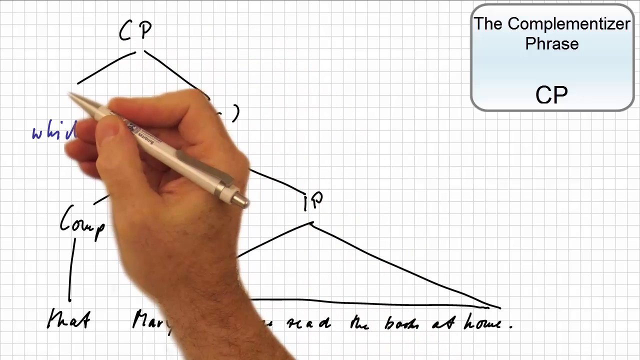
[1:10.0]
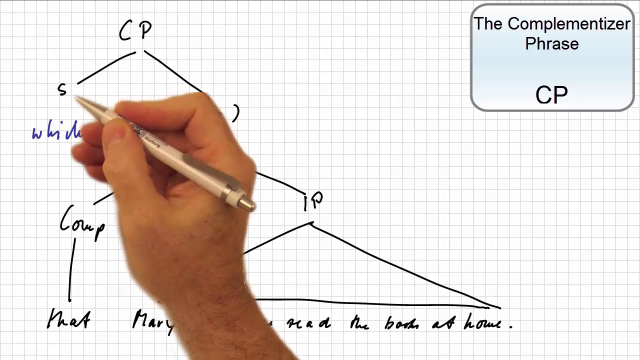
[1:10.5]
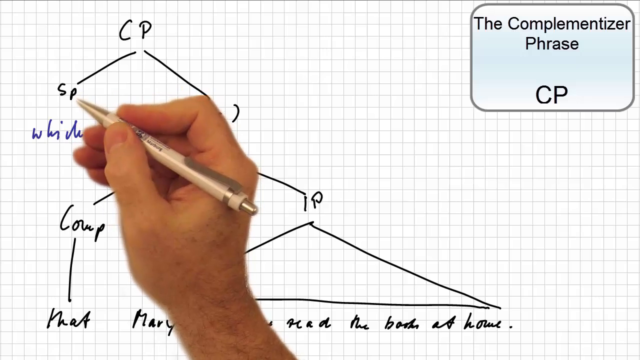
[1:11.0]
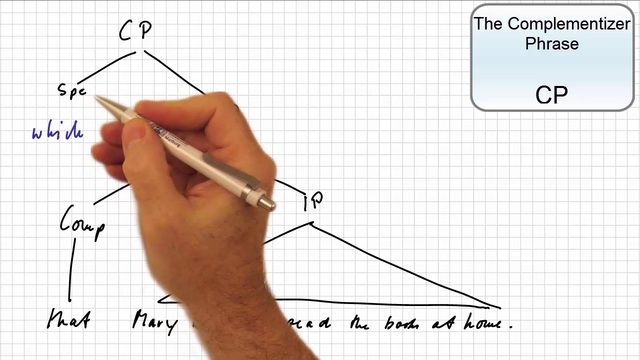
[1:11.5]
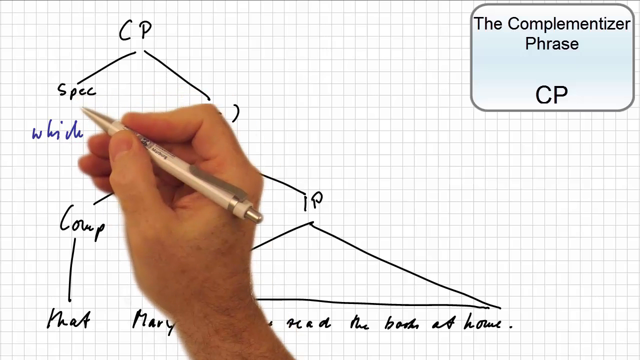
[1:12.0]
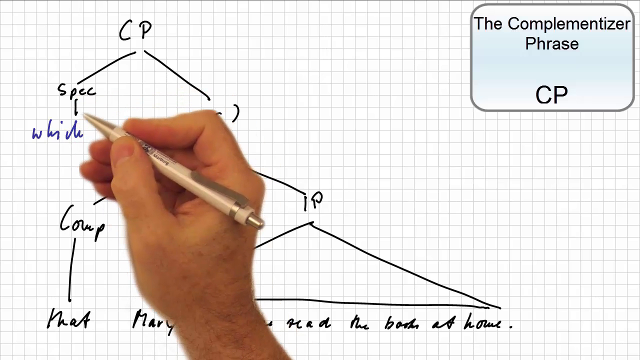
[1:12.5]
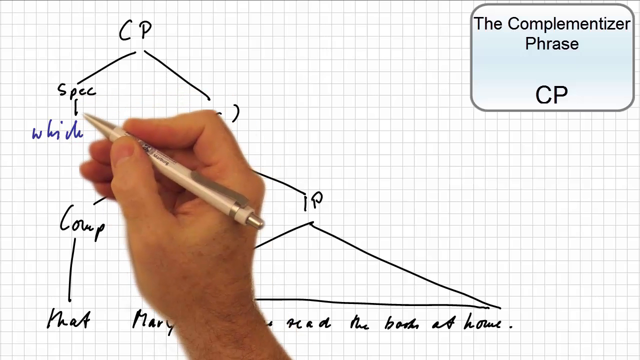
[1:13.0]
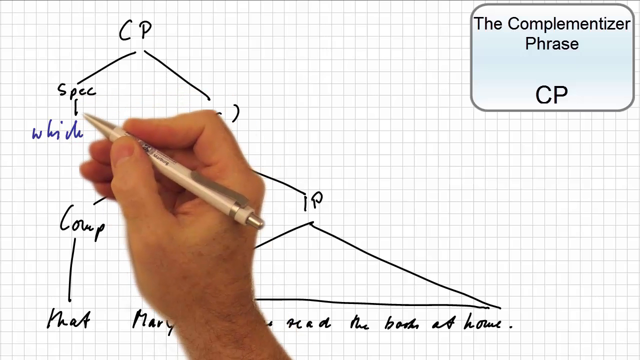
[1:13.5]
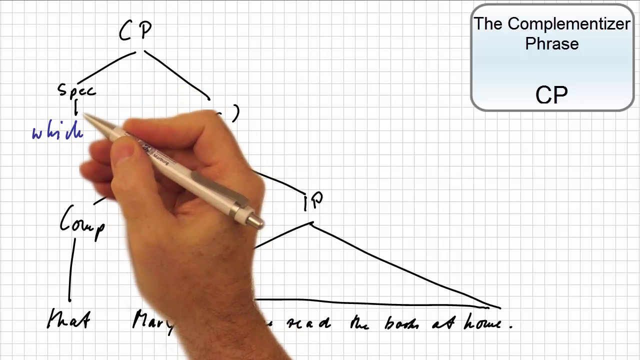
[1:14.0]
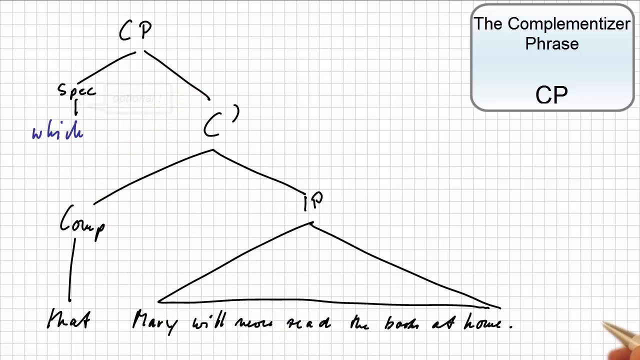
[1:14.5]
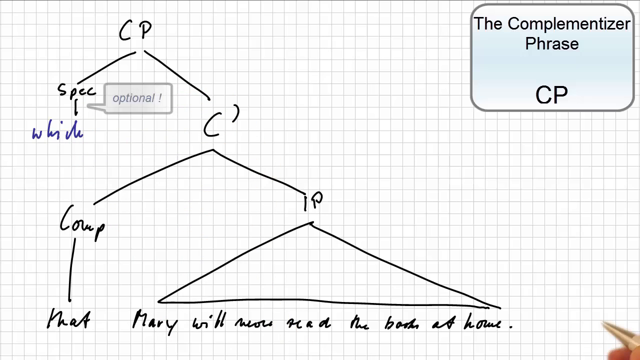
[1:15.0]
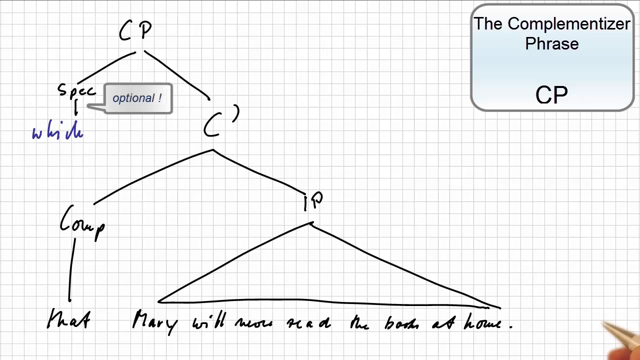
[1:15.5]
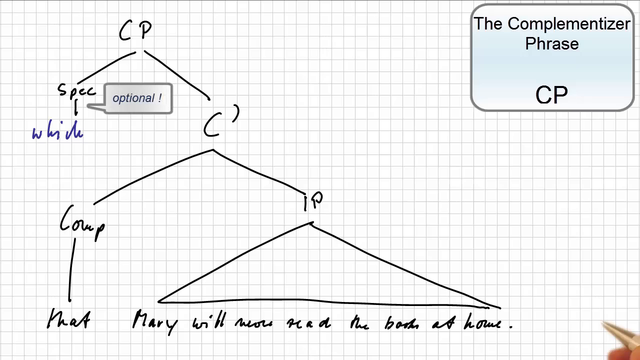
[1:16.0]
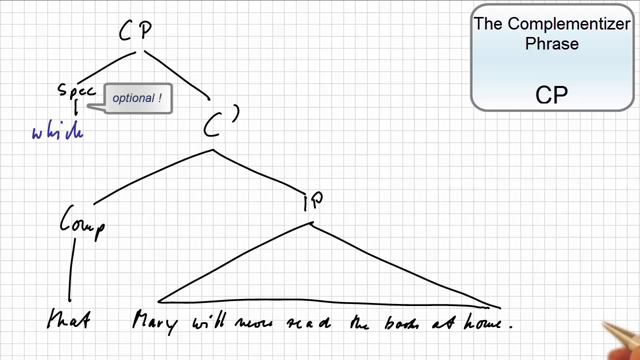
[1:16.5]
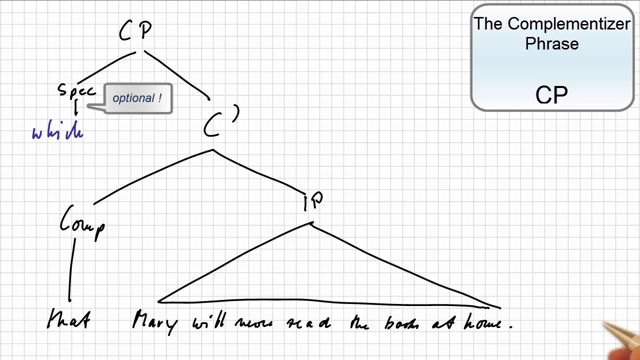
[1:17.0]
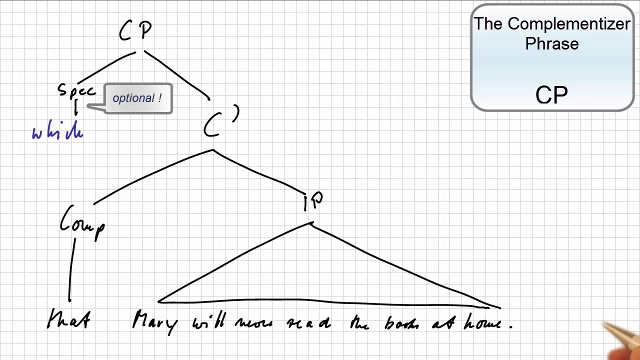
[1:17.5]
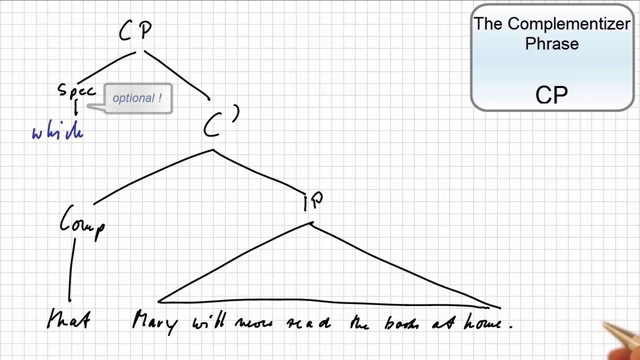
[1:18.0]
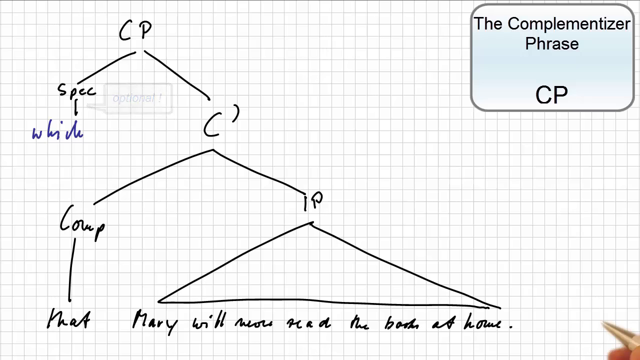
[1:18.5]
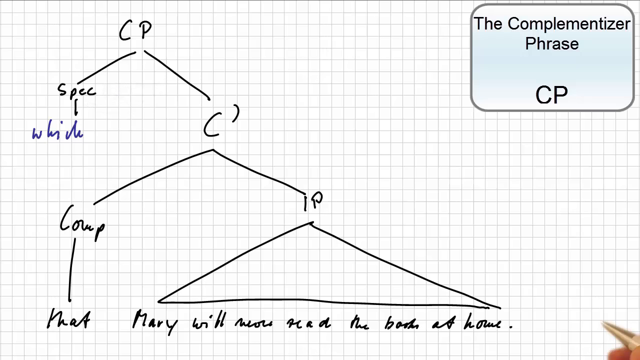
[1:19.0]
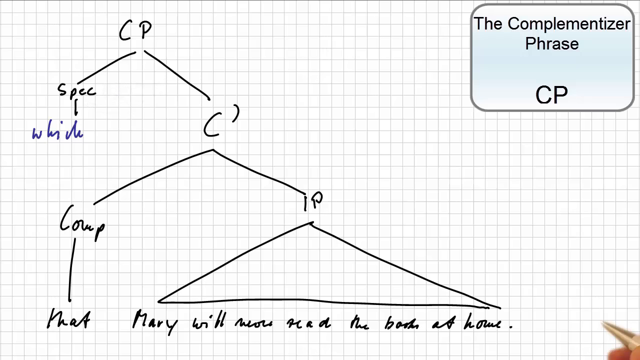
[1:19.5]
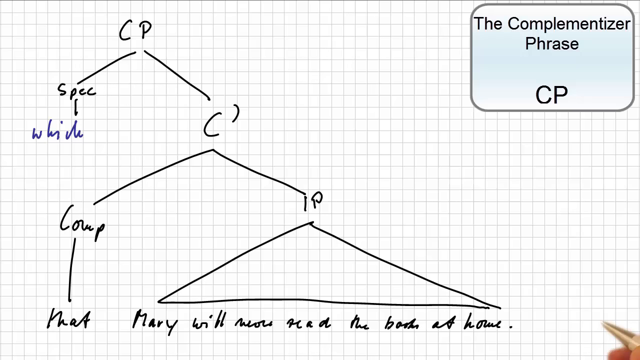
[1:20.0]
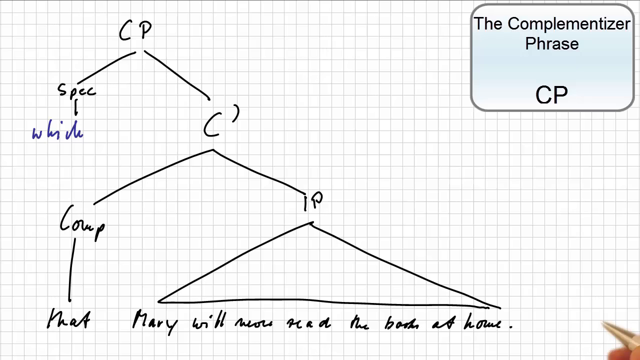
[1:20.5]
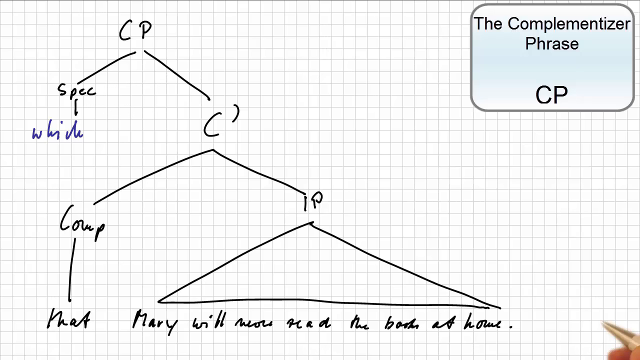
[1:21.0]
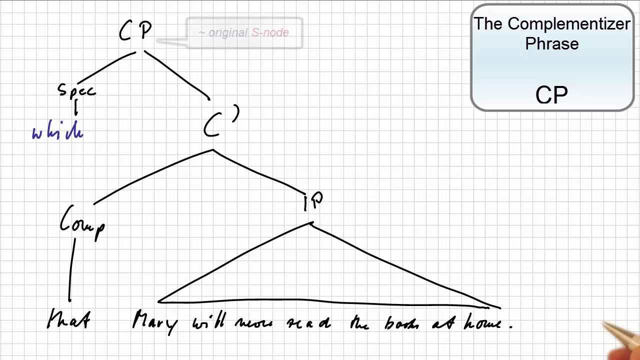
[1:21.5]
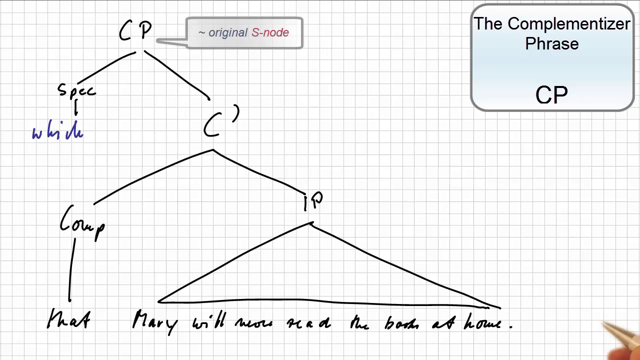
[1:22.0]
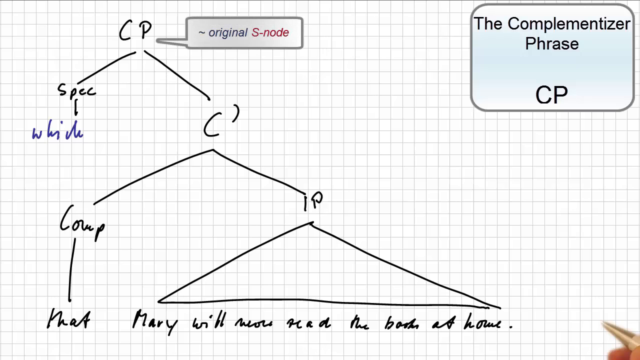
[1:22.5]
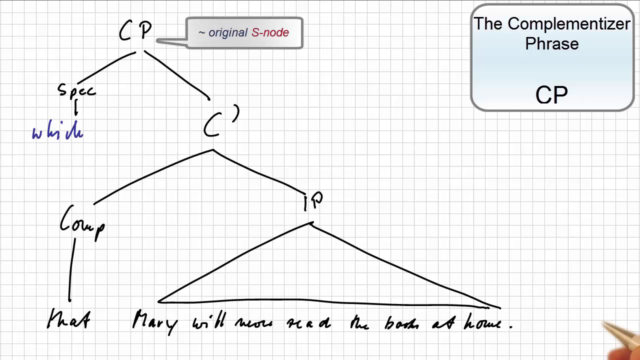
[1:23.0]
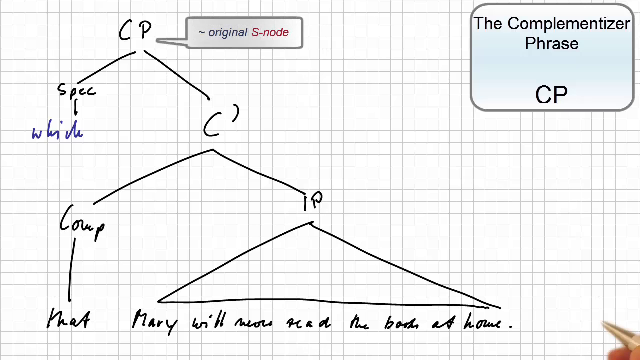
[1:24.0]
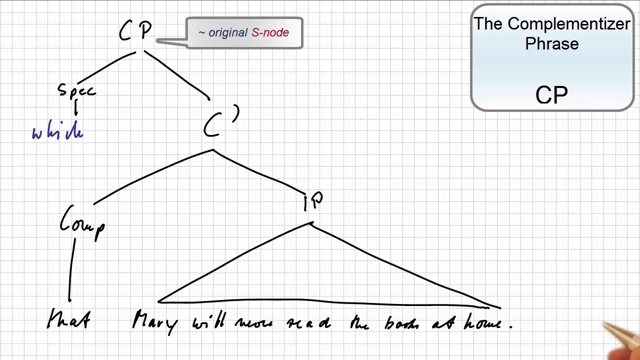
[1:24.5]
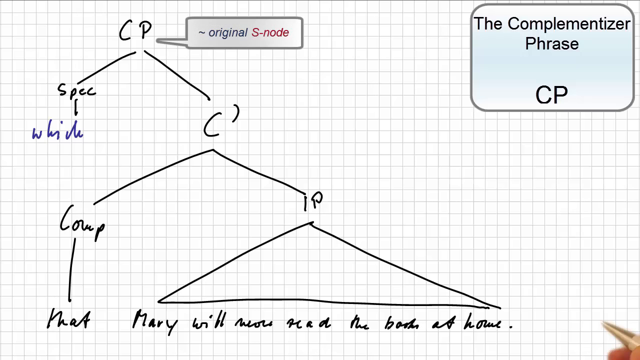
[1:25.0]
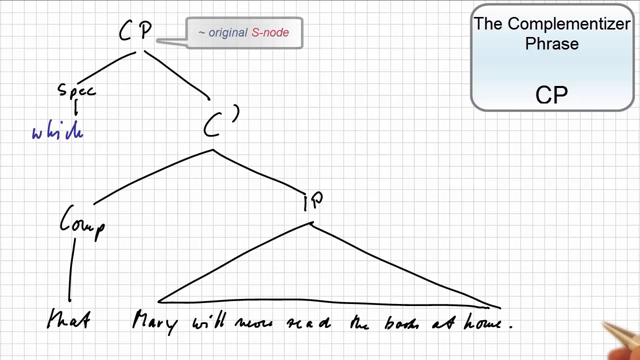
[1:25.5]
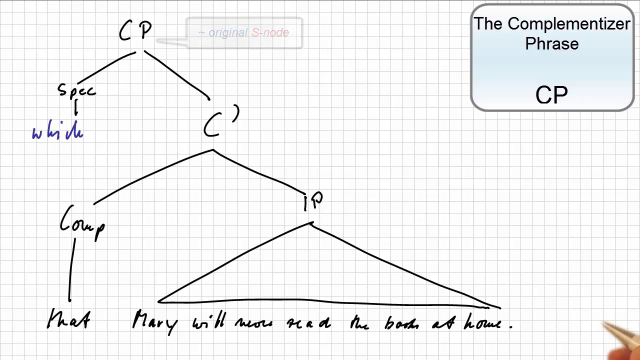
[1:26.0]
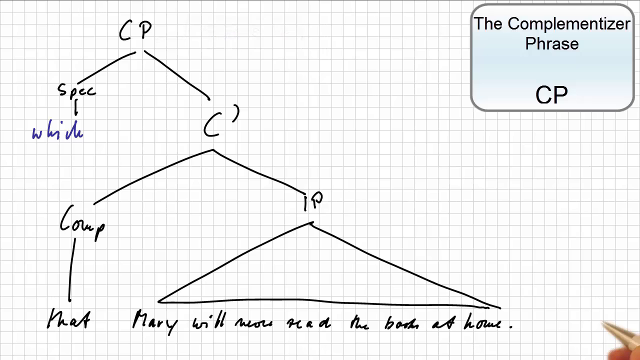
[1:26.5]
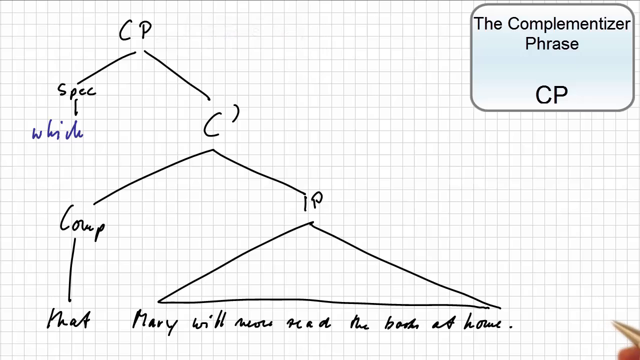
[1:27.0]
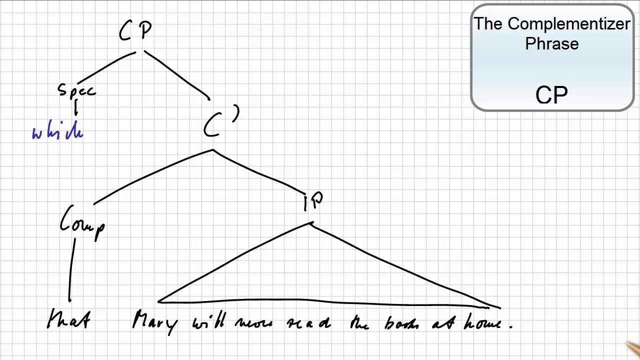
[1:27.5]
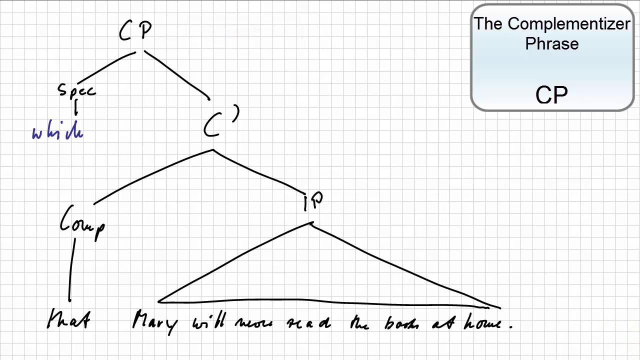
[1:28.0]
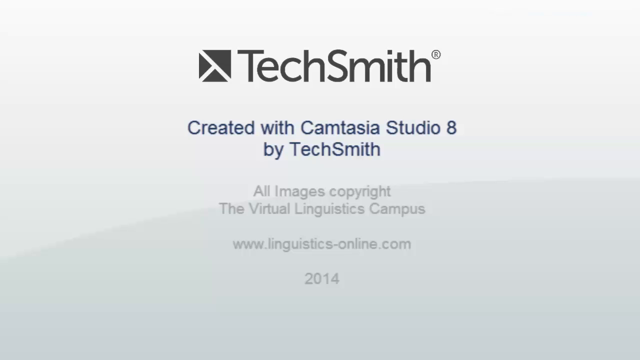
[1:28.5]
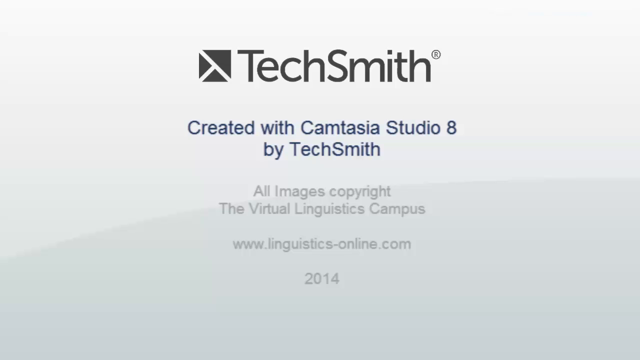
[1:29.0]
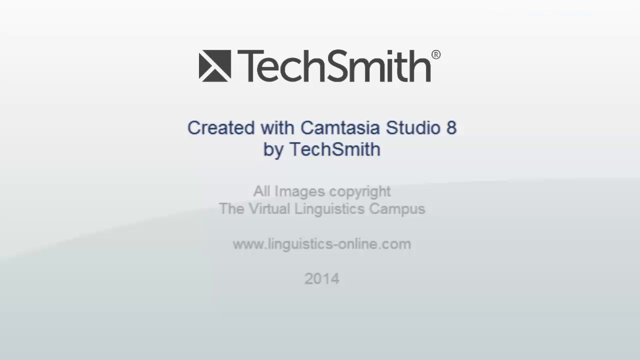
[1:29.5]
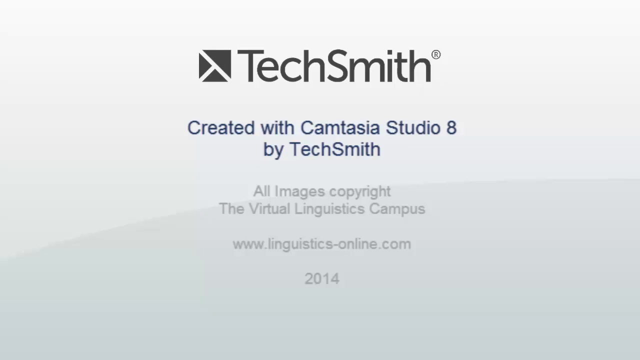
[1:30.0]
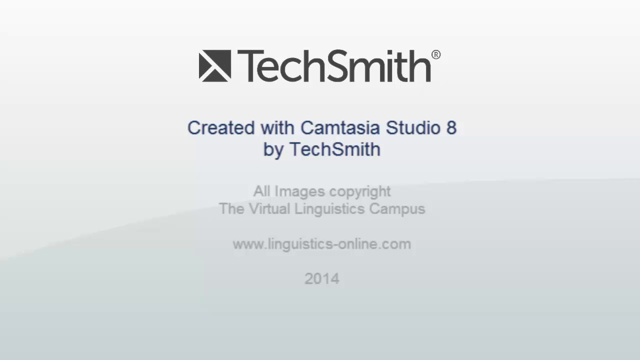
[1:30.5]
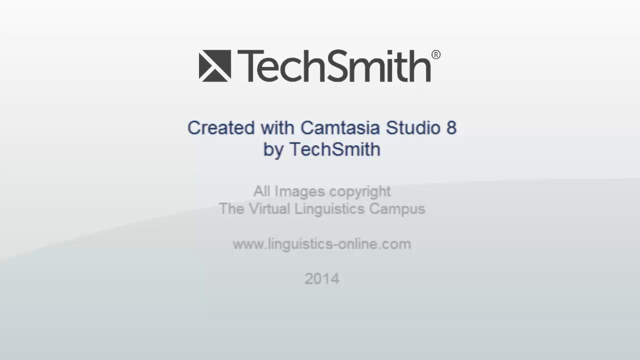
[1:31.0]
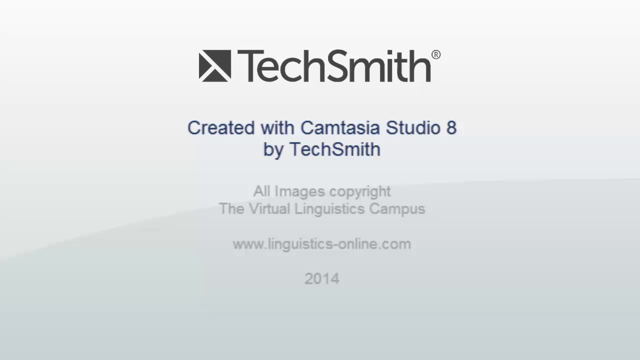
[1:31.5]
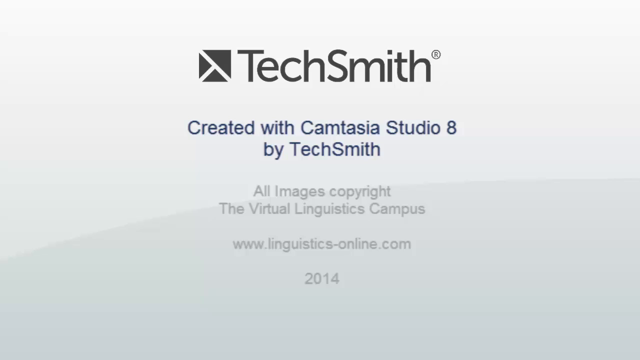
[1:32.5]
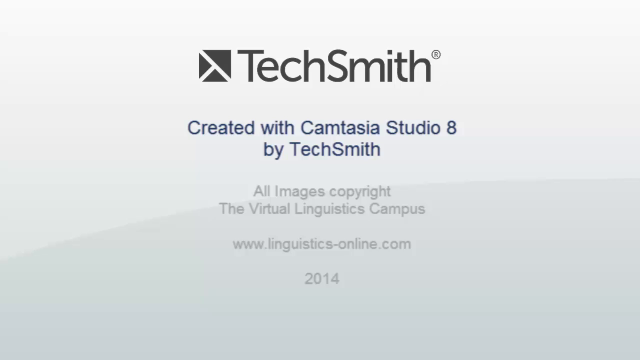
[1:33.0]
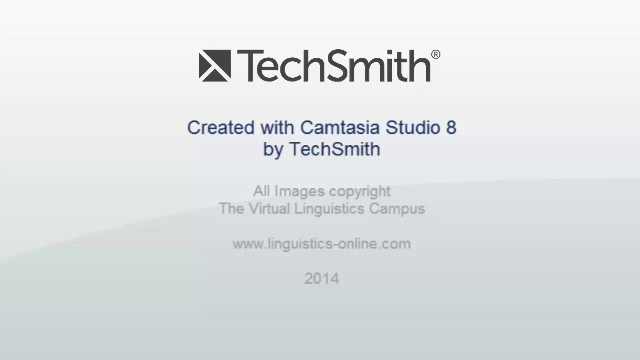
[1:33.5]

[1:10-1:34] The man has created two triangles and linked black lines connecting the text. At the bottom of the first triangle is the phrase "Mary will now read the book at home". On the left, "Matt" is connected to "comp". At the top of the triangle is "IP", and "comp" and "IP" are connected to "C". From "C", a line goes up to "CP", and under that a line goes to "SPECT", which is connected by a black line to "WHICH". The black line between "SPECT" and "WHICH" is optional. The word "WHICH" is in a blue font. The man says that the original S note is "CP", at the very top of the roof formed between "SPECT" and "C". In the top right, the complementizer phrase label "SCP" is shown. The man is using a cream-colored pen, and the hair on his hand is visible.